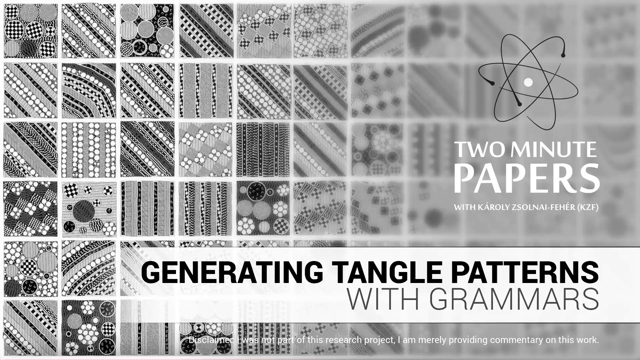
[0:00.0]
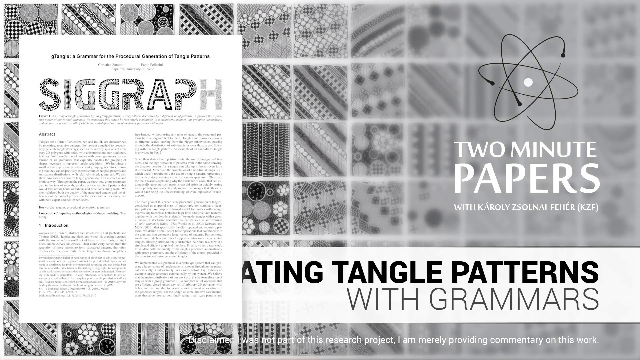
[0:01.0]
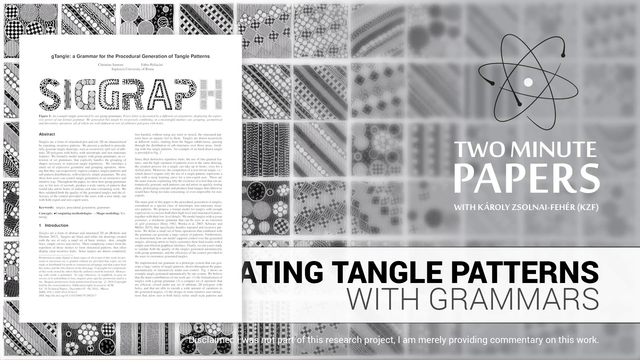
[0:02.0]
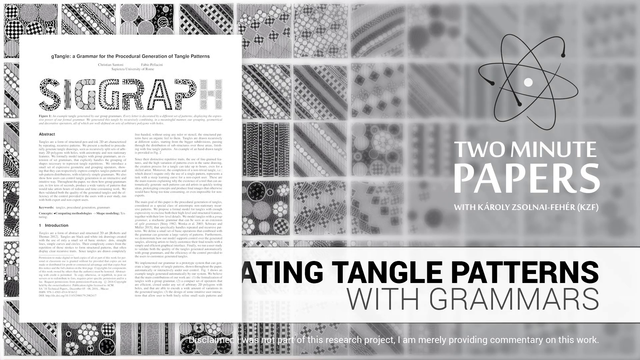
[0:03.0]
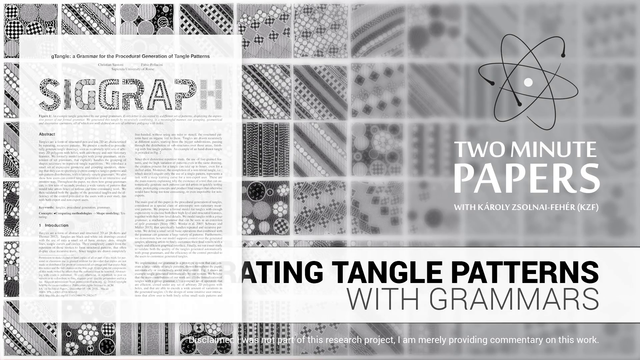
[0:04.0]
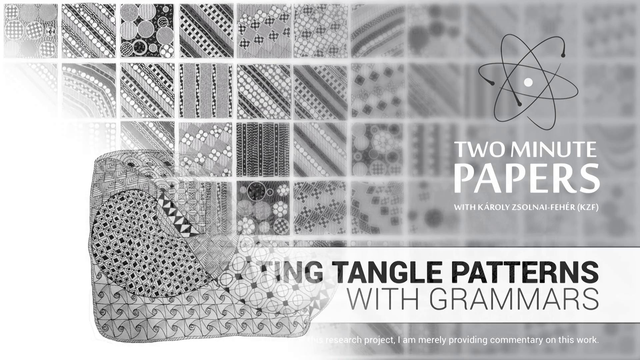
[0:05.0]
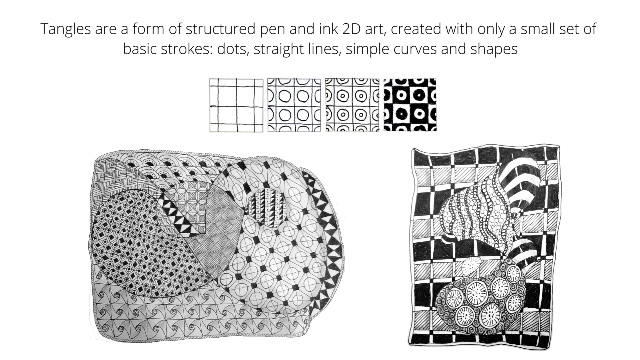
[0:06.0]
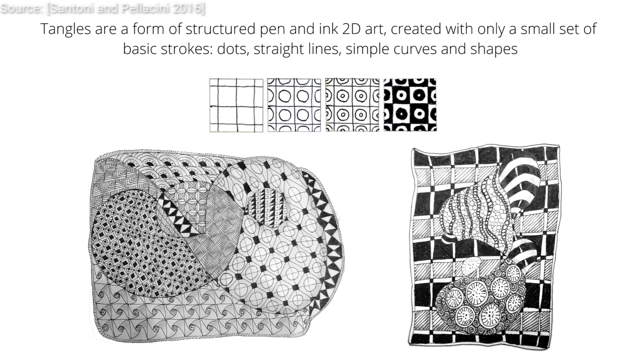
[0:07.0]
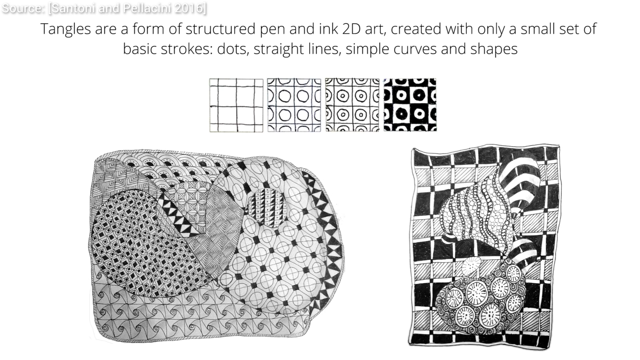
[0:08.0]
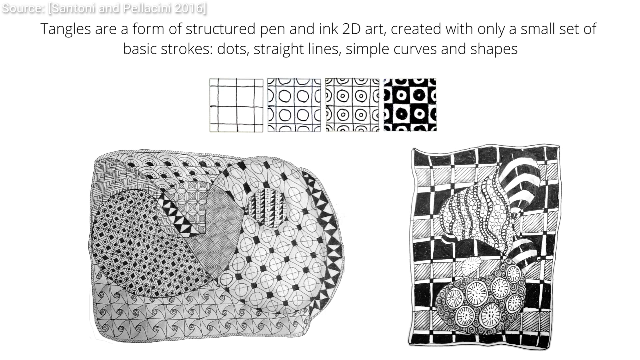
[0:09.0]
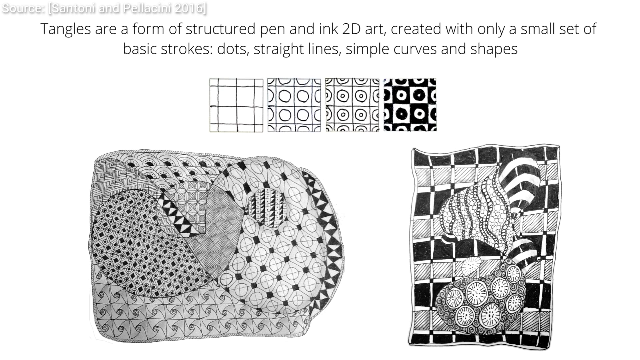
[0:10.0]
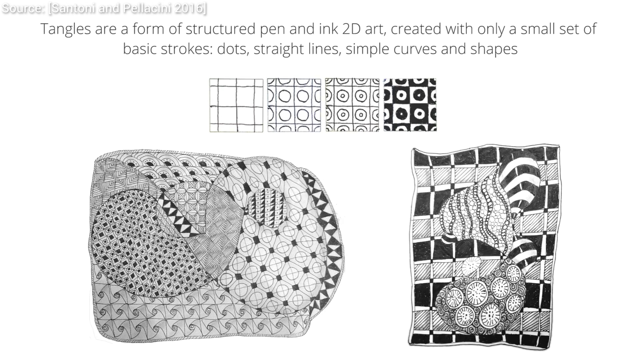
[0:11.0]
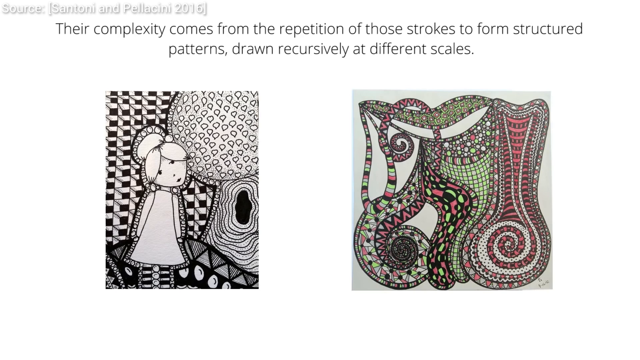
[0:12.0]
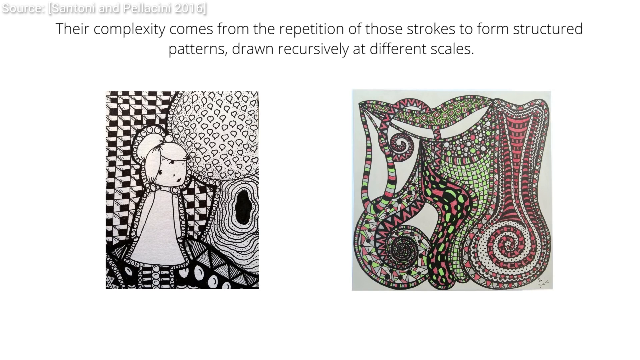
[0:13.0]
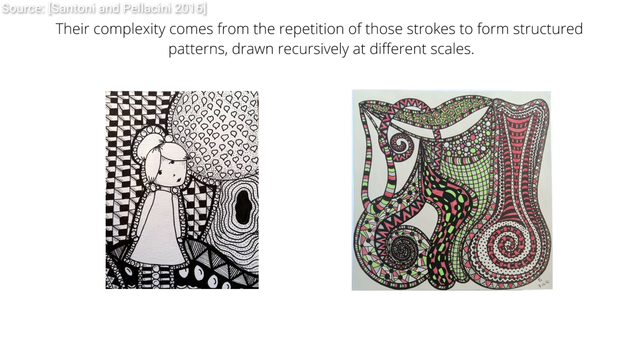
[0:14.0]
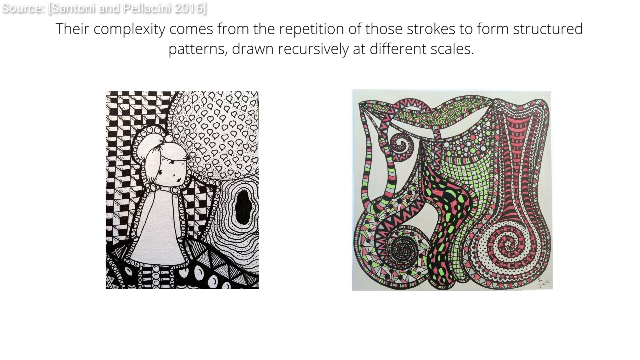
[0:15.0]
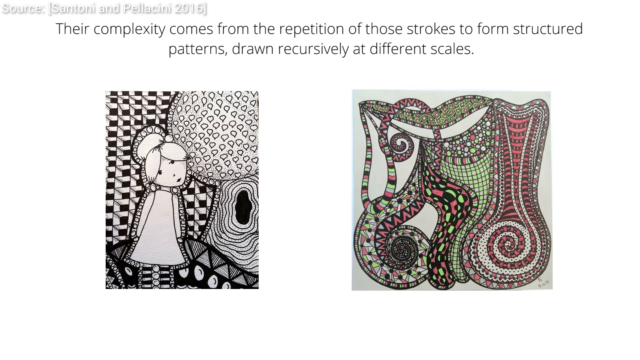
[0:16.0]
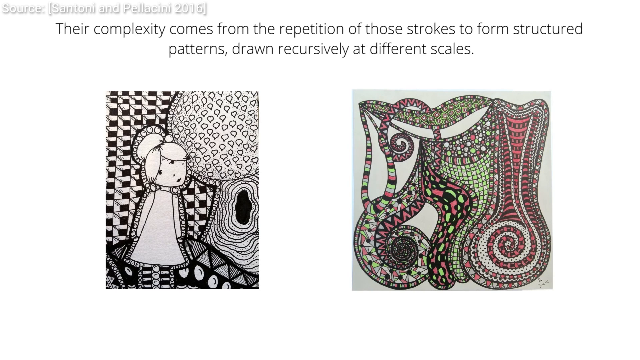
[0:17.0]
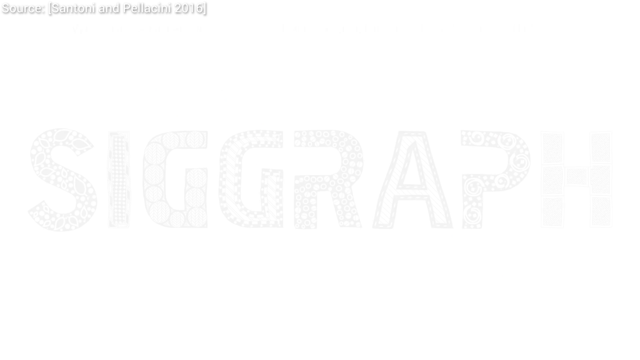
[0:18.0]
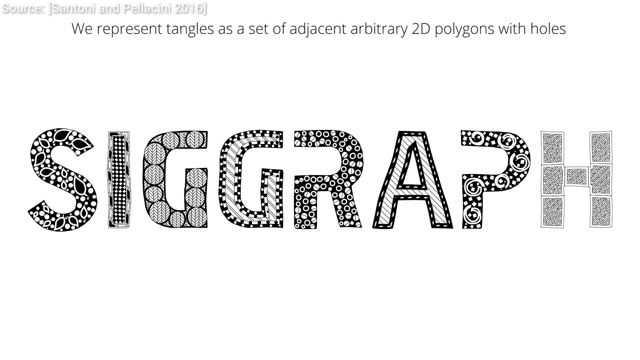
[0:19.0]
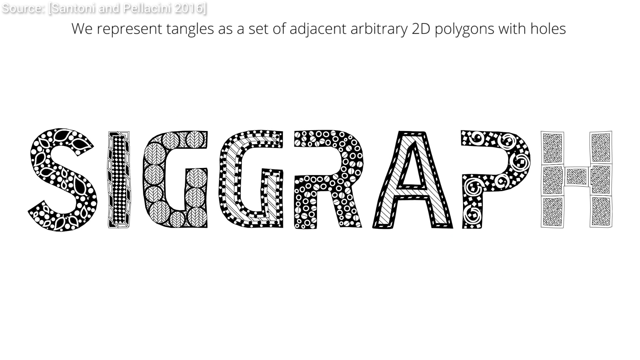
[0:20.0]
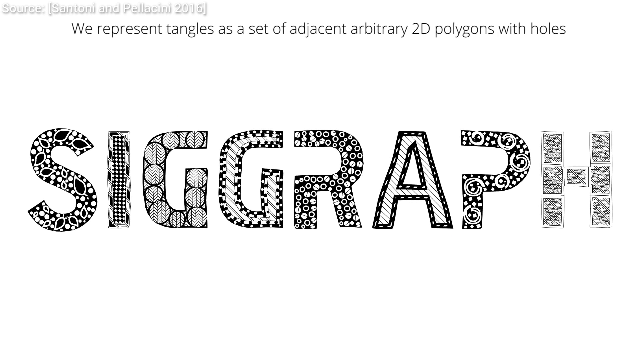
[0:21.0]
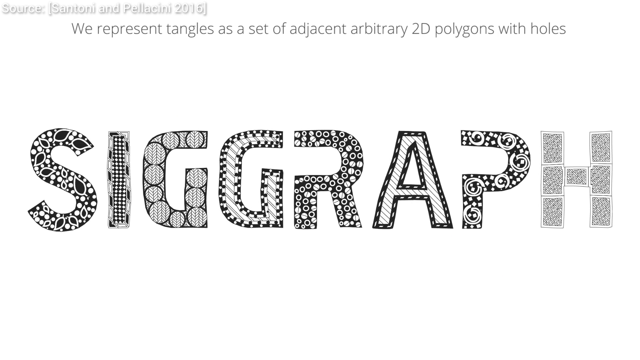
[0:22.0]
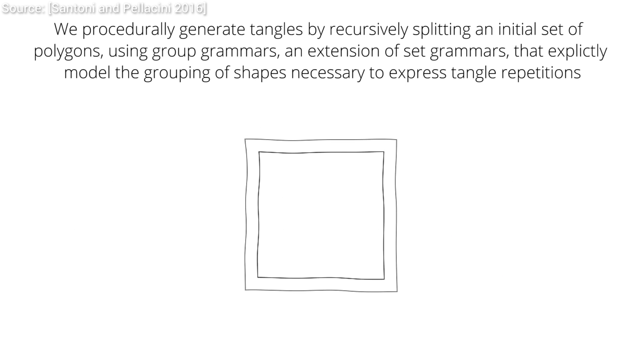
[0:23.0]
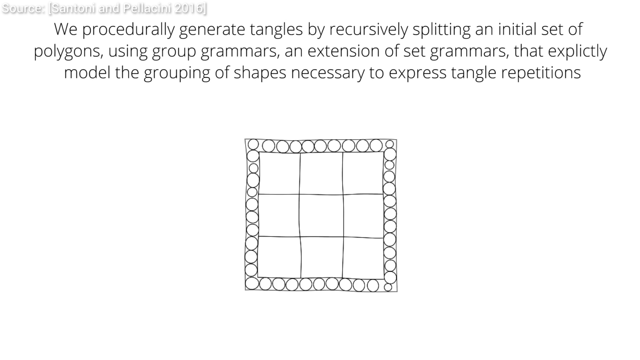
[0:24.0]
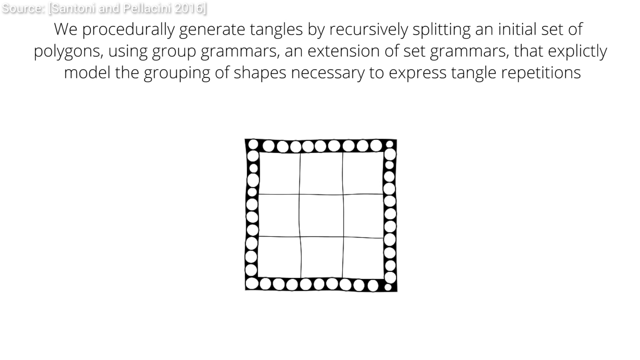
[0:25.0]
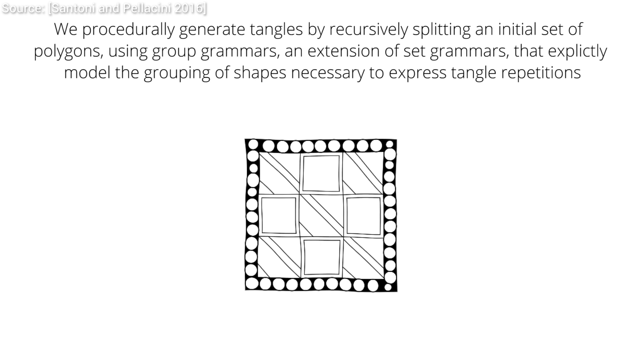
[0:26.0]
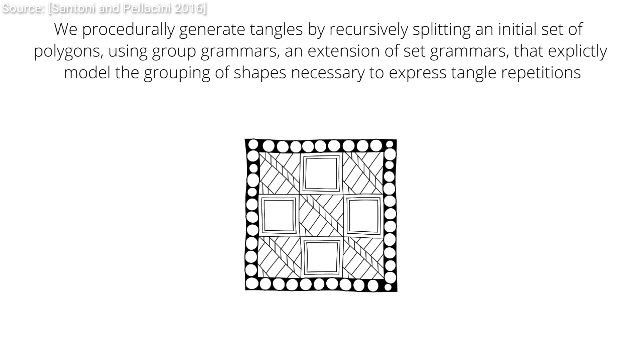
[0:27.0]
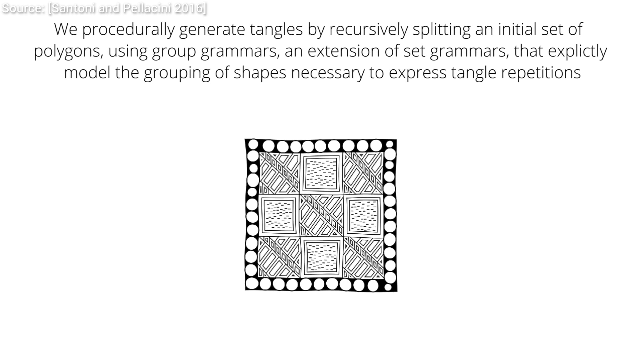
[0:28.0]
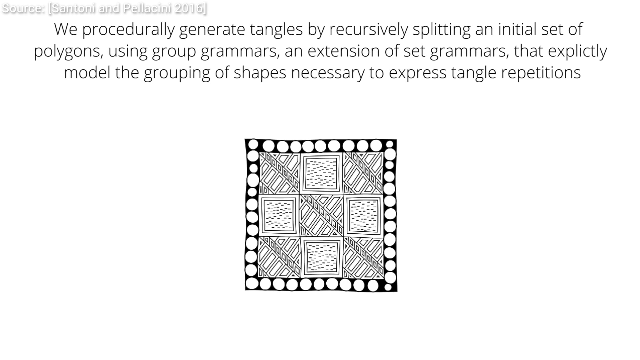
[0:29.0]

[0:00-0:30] A large number of black-and-white design patterns fill the screen. To the right is what looks like the name of the segment, "Two Minute Papers," and along the bottom is the topic of the video: "Generating Tangled Patterns with Grammars." A page then appears on the left side, with "SIGGRAPH" in the center at the top of the page. The scene changes to text at the top reading "Tangles are a form of structured pen and ink 2D art, created with only a small set of basic strokes, dots, straight lines, simple curves, and shapes." Below the text are what look like white and black images of cloths bearing unique-looking design patterns, all in black and white. The scene changes again and another text appears at the top: "Their complexity comes from the repetition of those strokes to form structured patterns, draw recursively at different scales." Below it are two pictures: on the left, a little girl, all black in color; on the right, a drawing of very abstract shapes, like two or three spirals, with some coloring in it. A large word, "SIGGRAPH," then appears in the middle. The scene changes to a square in the middle, with captions on top reading "We procedurally generate tangles by recursively splitting an initial set of polygons using group grammars, an extension of set grammars that explicitly model the grouping of shapes necessary to express tangle repetitions." Below this text is a black-and-white square with square-like patterns in its middle and circle-like patterns around it, which is filling in, all in black and white.